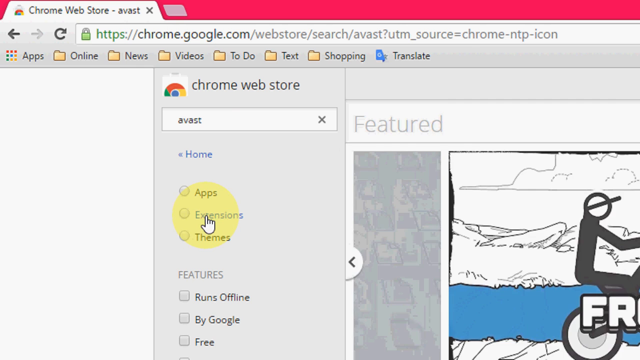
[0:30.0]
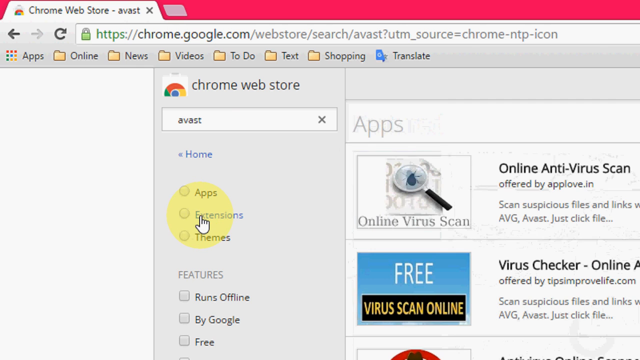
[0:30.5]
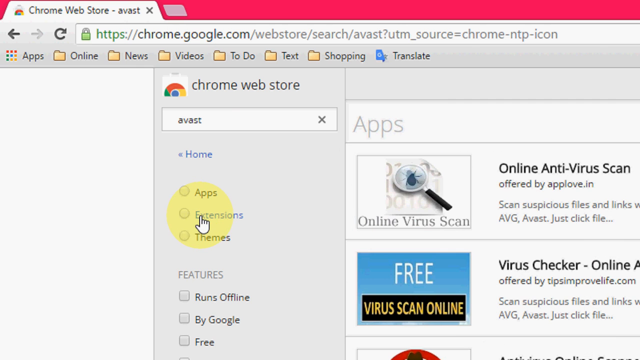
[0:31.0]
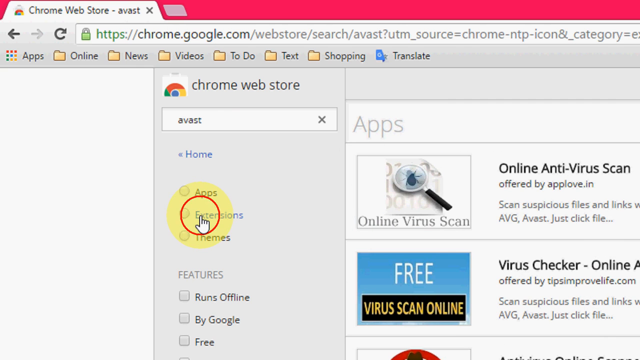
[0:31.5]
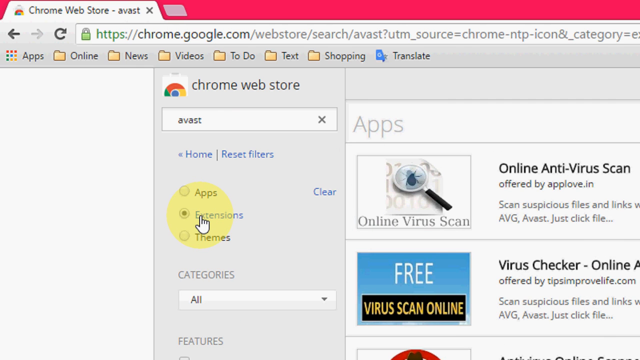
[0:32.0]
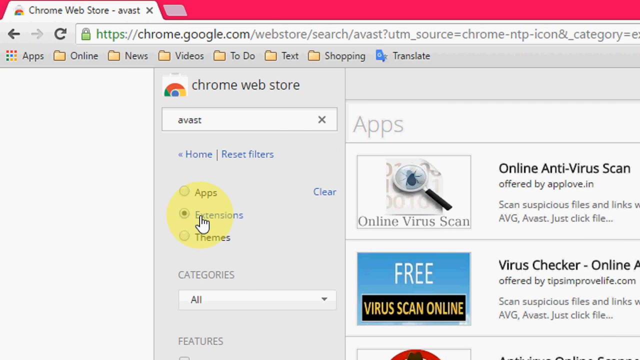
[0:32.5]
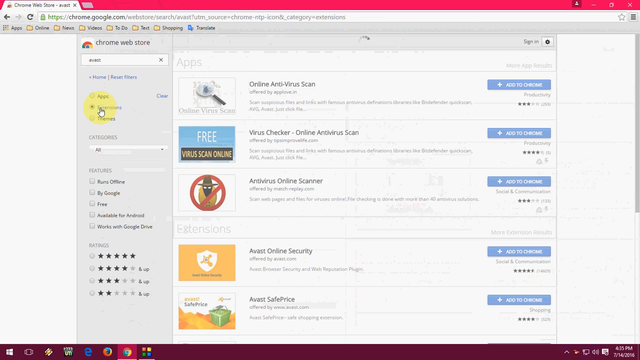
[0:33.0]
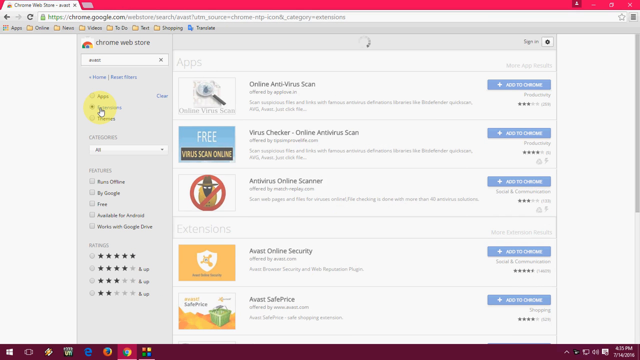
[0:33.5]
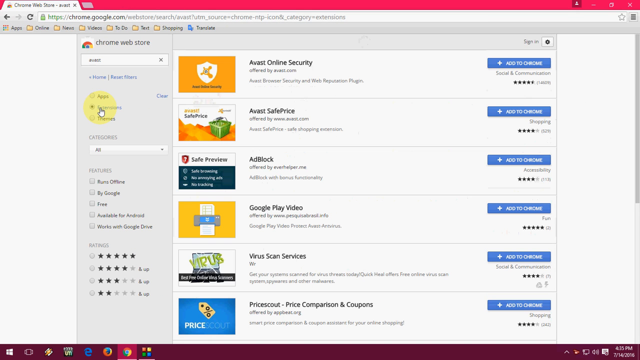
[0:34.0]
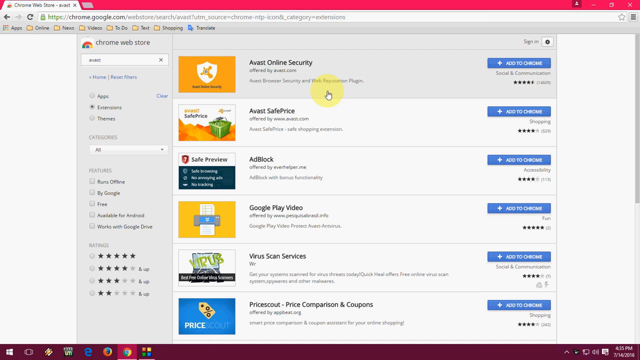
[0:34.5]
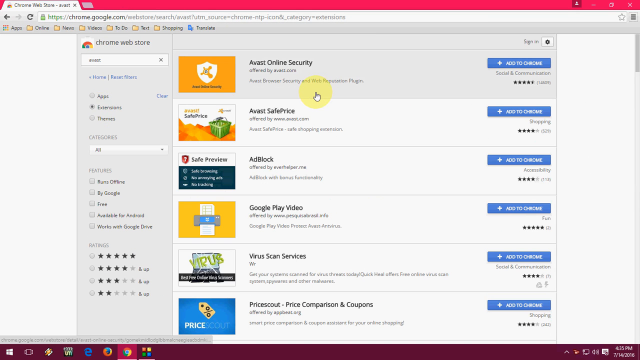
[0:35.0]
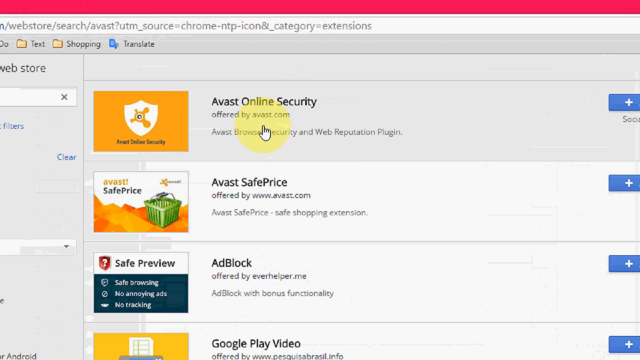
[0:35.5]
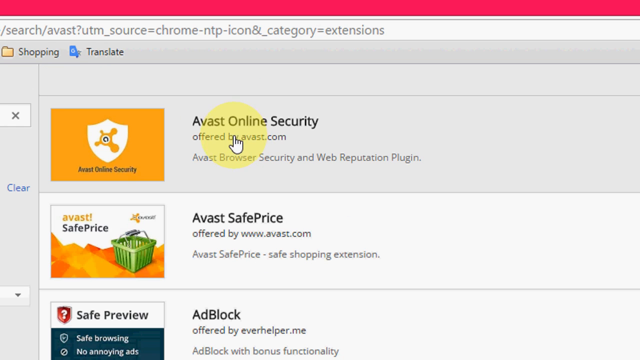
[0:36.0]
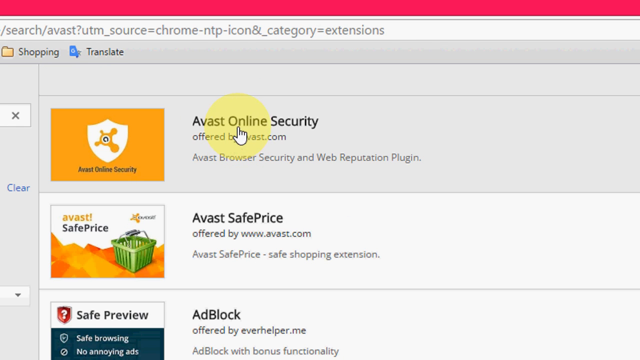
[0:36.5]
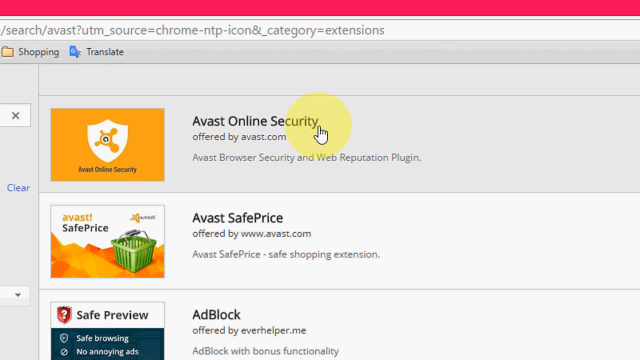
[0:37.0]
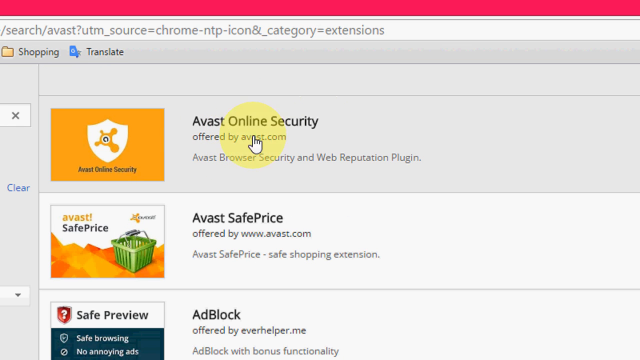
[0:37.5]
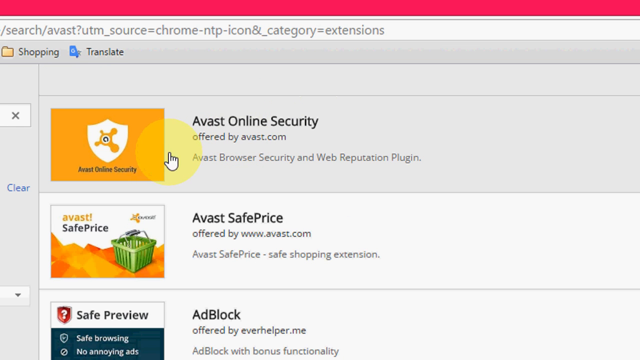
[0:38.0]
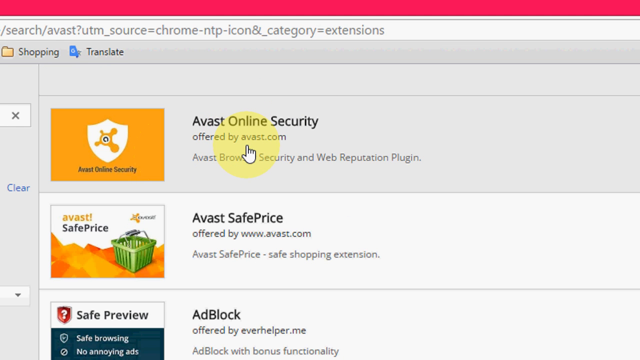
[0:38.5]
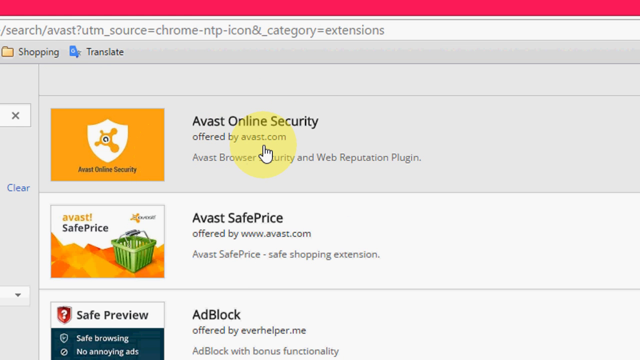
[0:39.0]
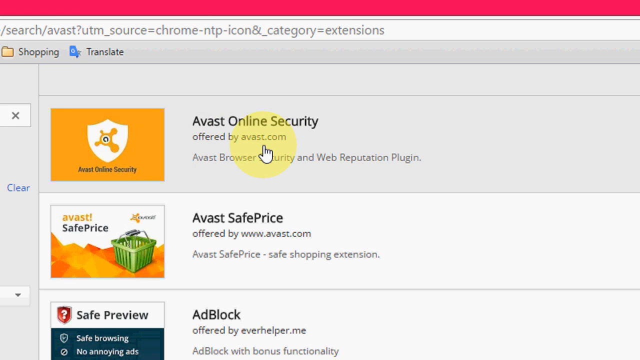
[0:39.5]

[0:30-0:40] A zoomed-in Google web page shows a search in the Chrome web store, with Avast in the search bar. The user's cursor hovers over Extensions and selects it. The view zooms out of that page and then zooms in on the search results. One reads "Avast Online Security," and the user hovers over it for a bit; its second line reads that it is offered by Avast.com. The cursor pauses there for a second.